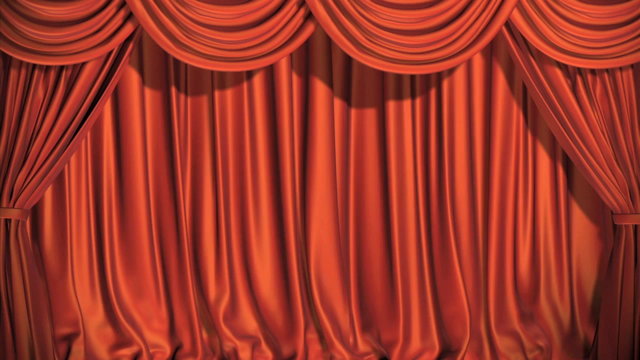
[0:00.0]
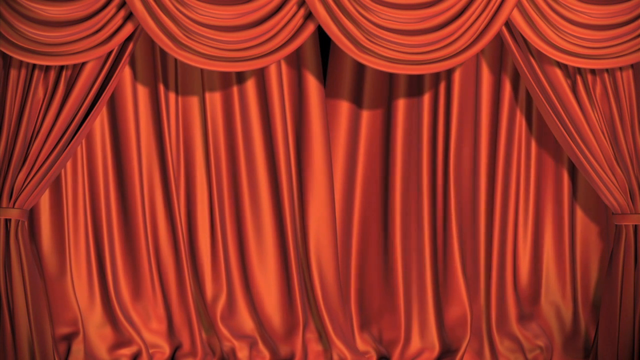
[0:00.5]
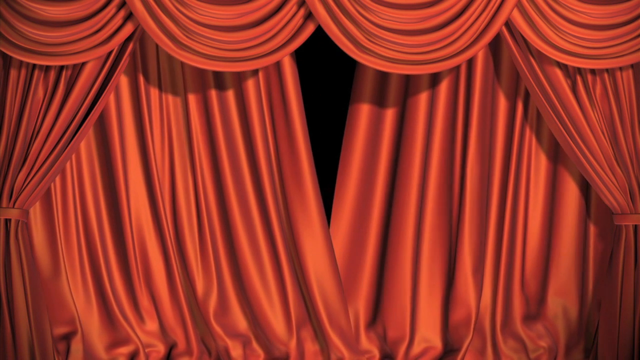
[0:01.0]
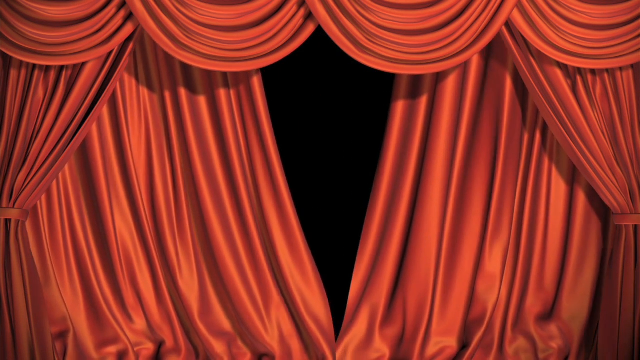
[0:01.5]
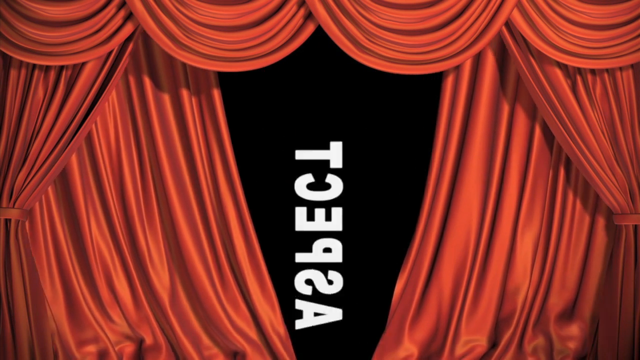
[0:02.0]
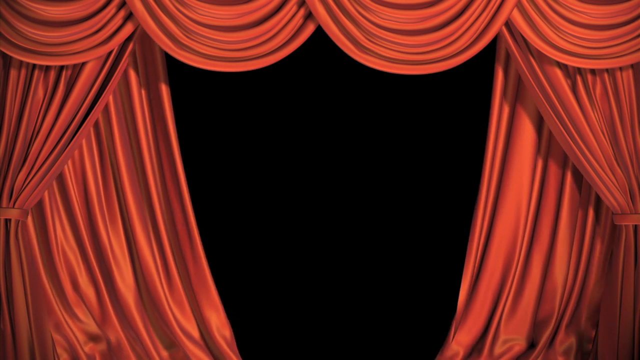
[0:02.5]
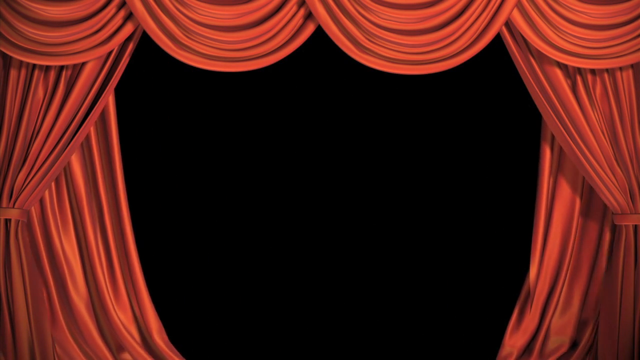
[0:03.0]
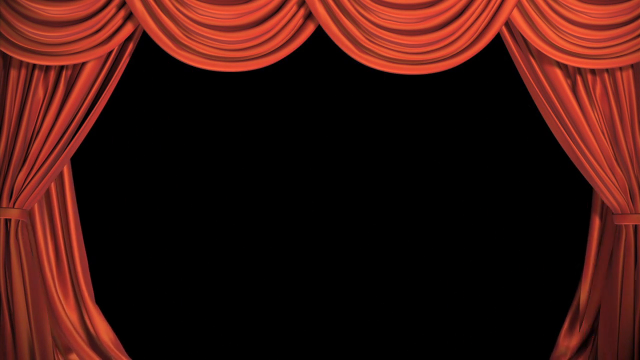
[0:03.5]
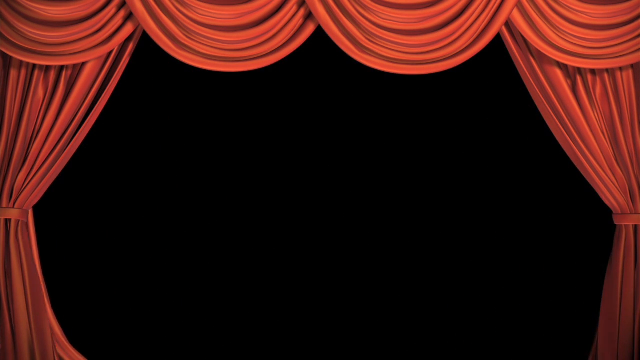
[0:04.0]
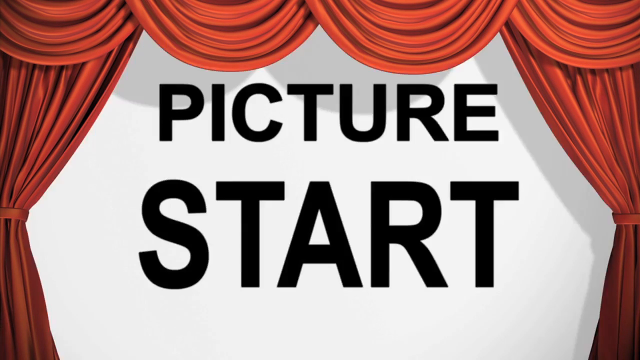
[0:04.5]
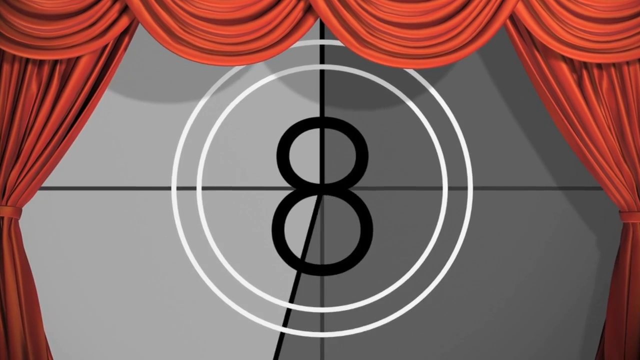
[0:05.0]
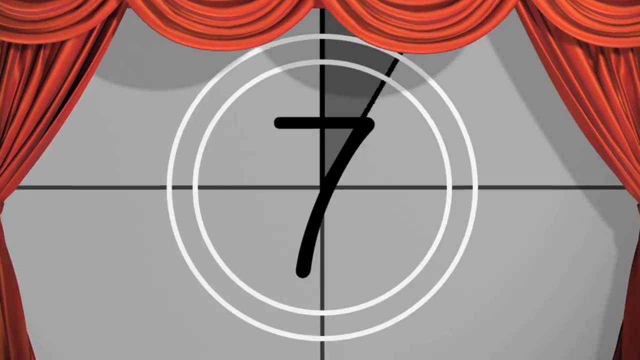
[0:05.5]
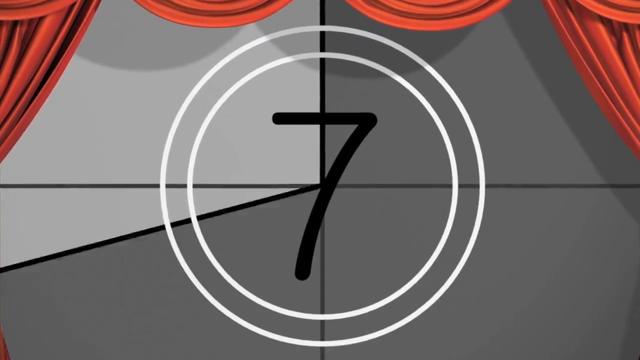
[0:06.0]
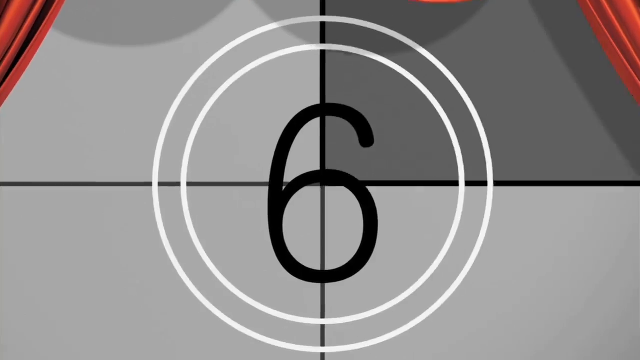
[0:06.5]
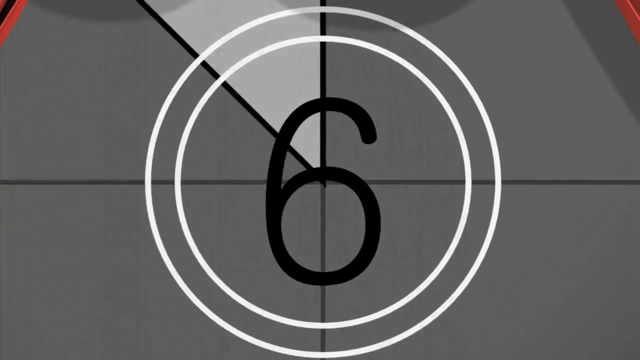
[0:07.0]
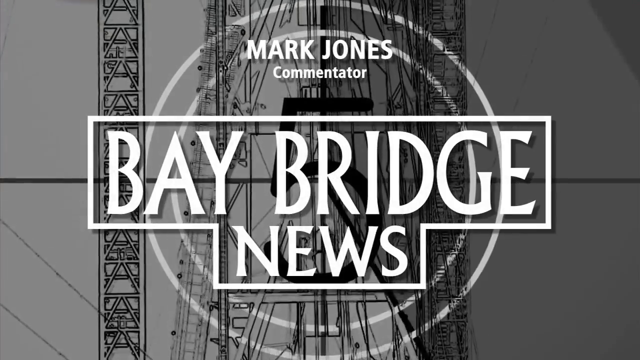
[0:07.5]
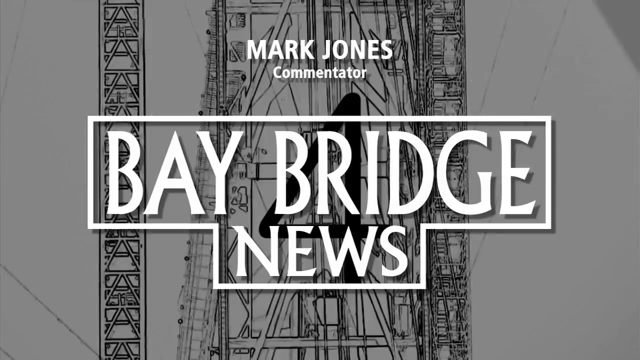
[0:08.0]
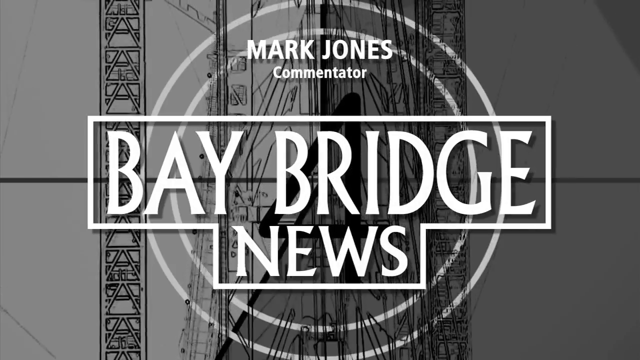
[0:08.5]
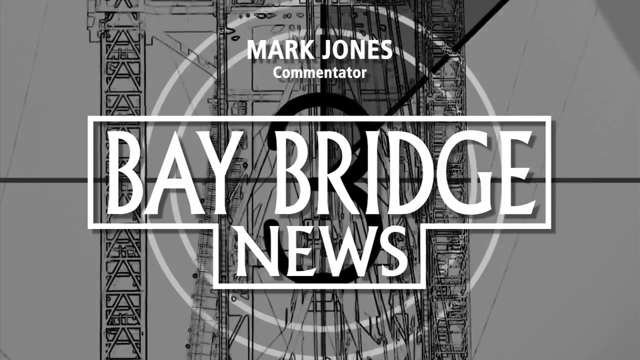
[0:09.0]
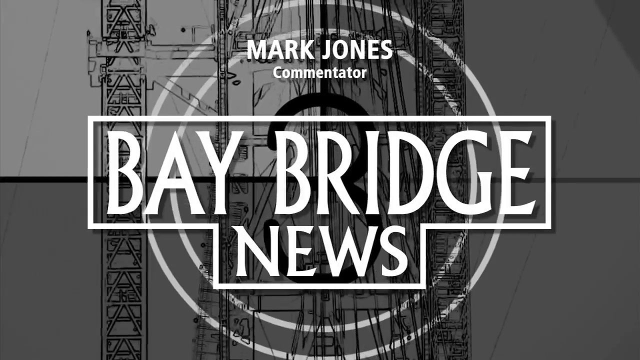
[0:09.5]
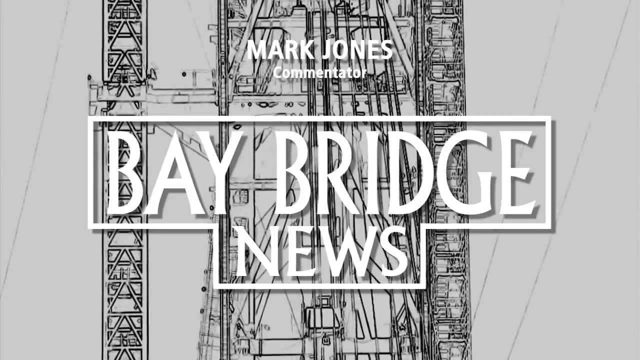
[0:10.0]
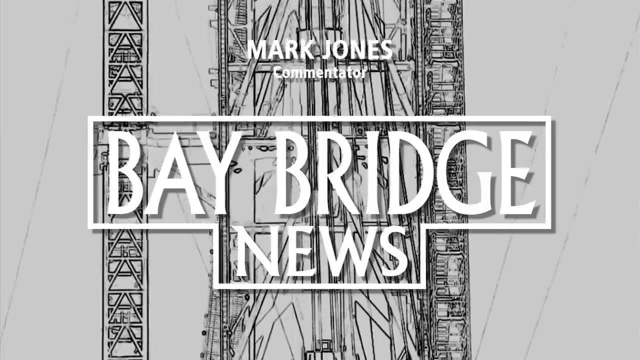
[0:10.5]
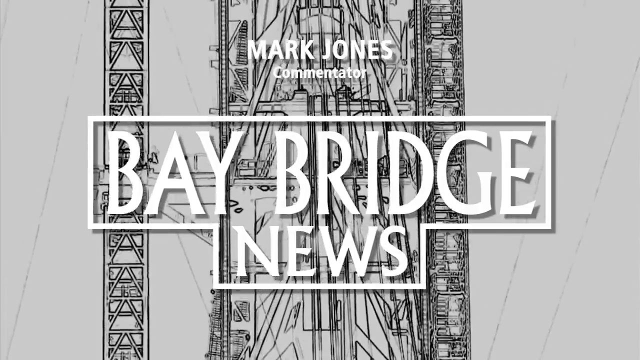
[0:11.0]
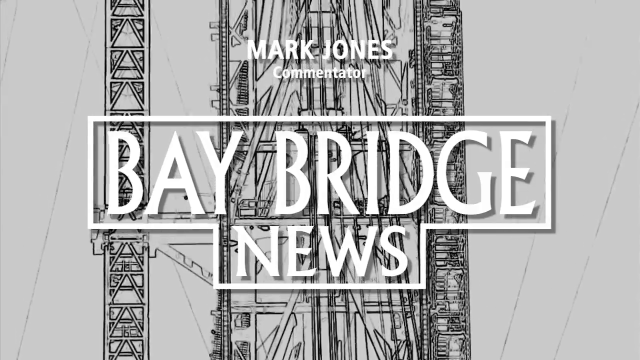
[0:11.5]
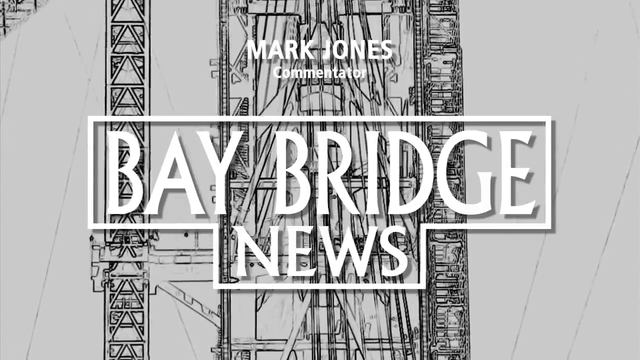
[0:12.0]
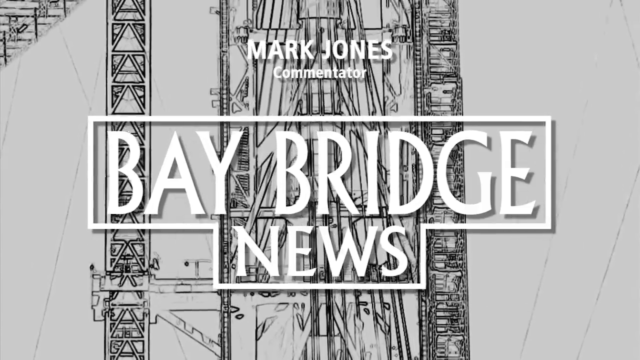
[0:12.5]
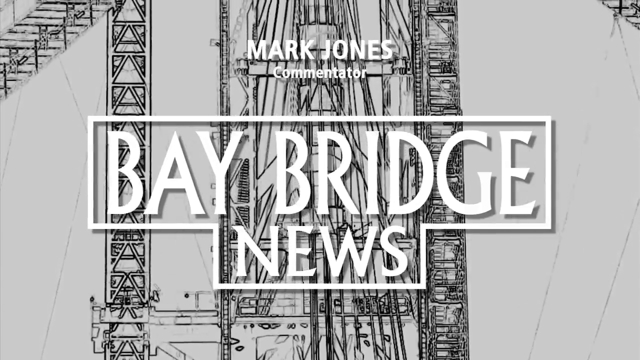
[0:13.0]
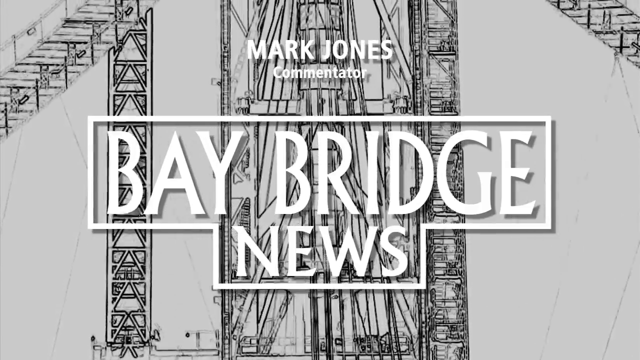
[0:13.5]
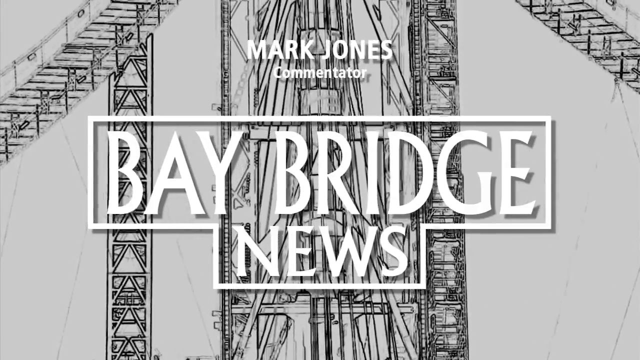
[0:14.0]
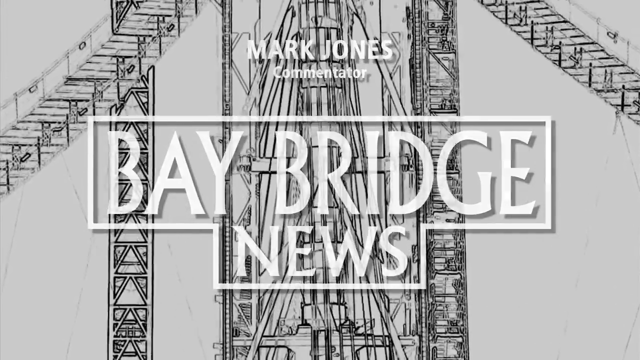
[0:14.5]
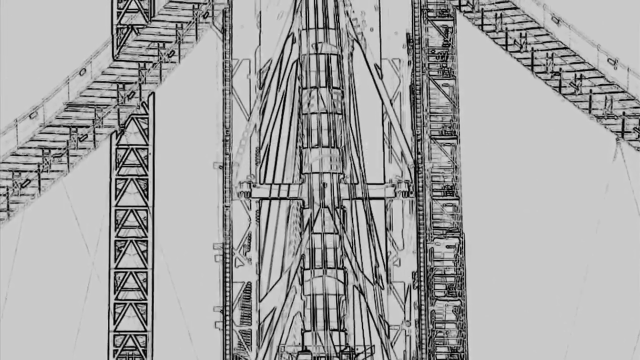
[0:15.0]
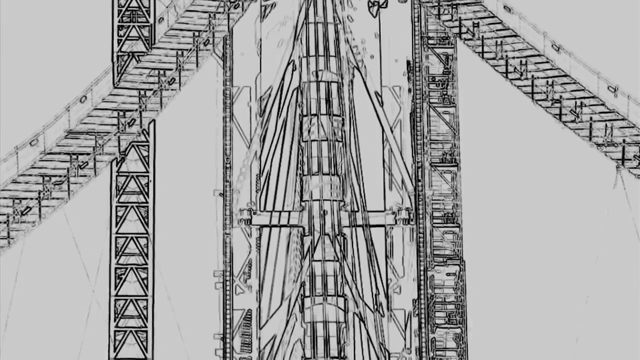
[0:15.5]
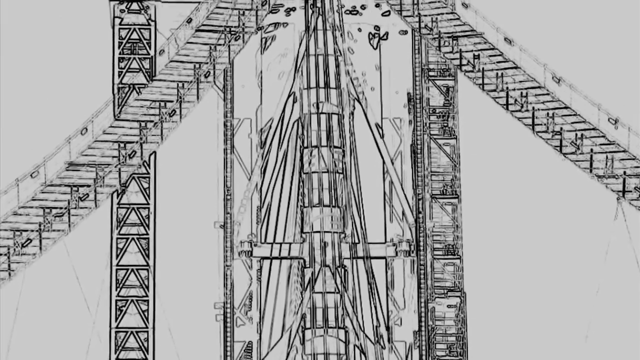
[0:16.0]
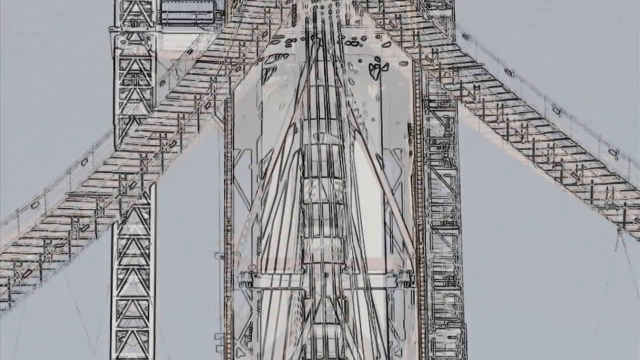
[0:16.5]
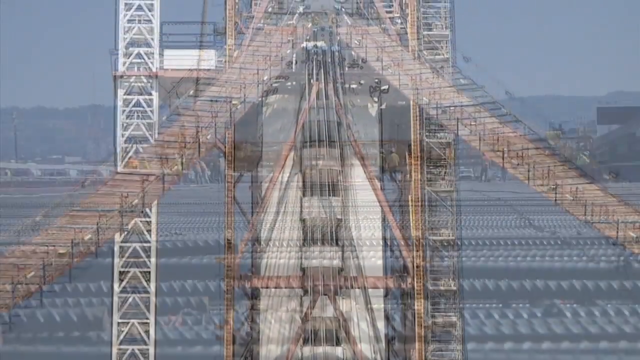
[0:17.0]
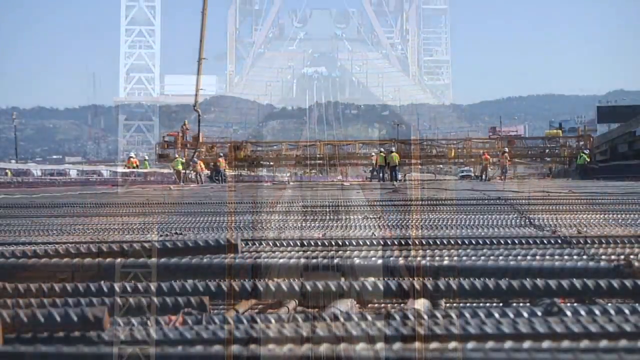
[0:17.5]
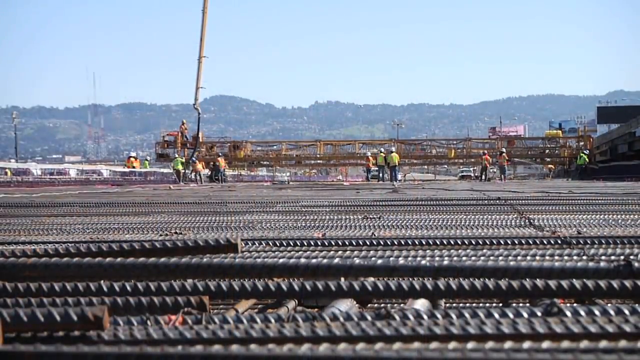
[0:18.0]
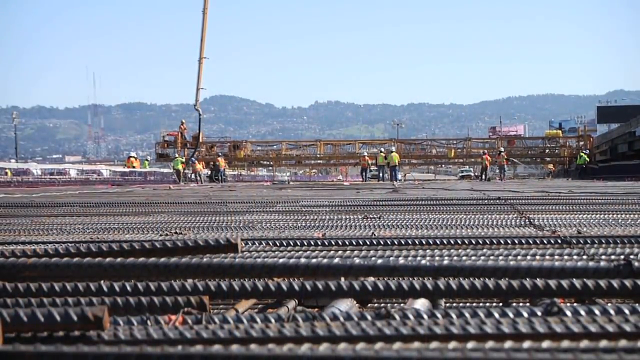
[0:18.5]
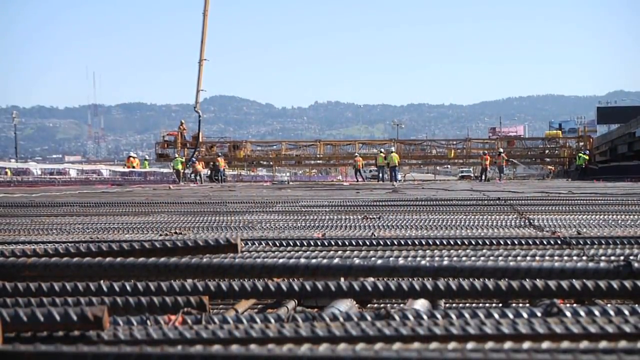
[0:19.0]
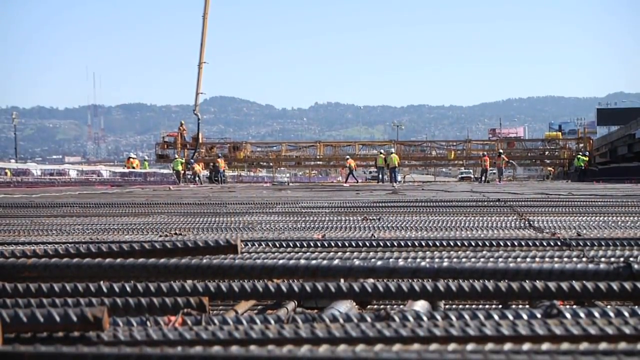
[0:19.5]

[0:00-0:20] The whole screen shows a red theater that seems to open and begin a presentation. The presentation is a black screen on which some text appears very quickly before a countdown from 8 to 0 appears. At that moment the title appears: "Mark Jones, commentator, Bay Bridge News." It has the style of an old black-and-white television program. There is a sketch of what appears to be a spaceship station. The scene changes to a construction site where workers are working over thousands of metal wires laid on the ground.